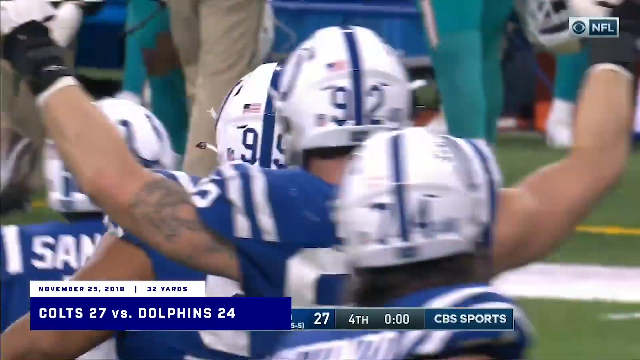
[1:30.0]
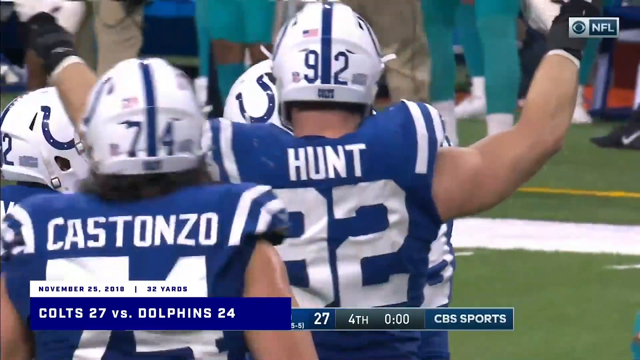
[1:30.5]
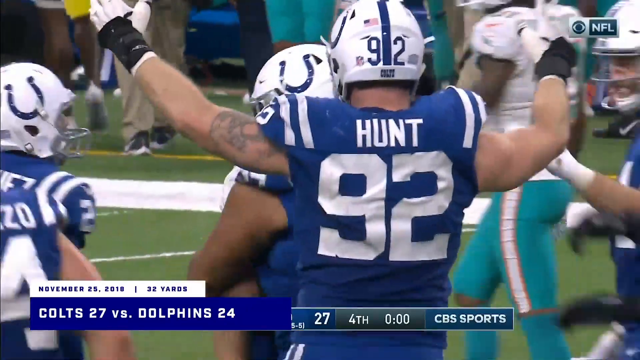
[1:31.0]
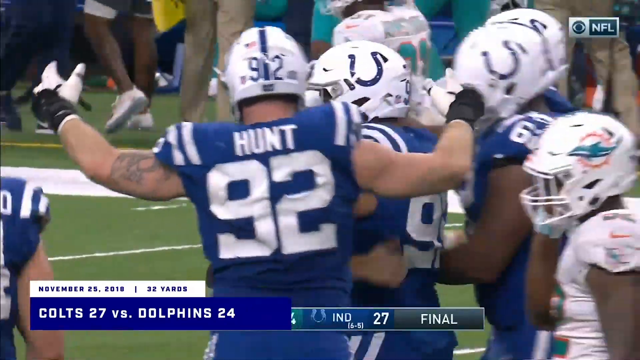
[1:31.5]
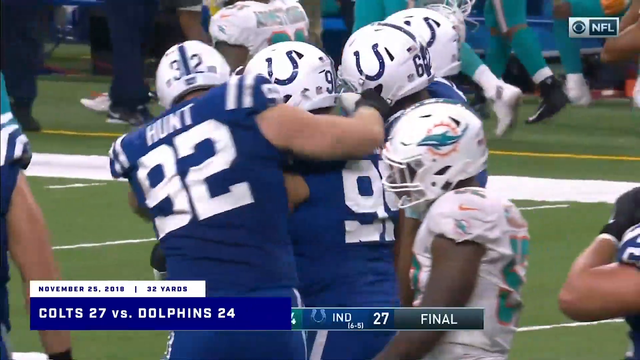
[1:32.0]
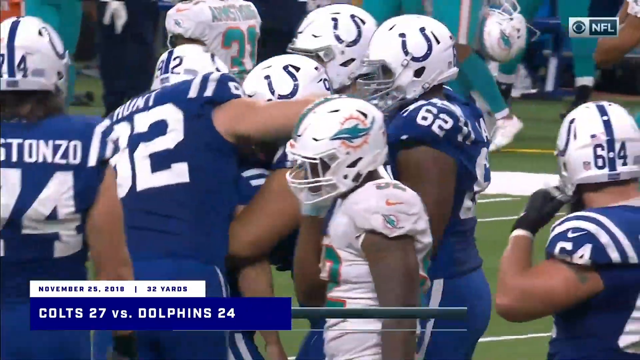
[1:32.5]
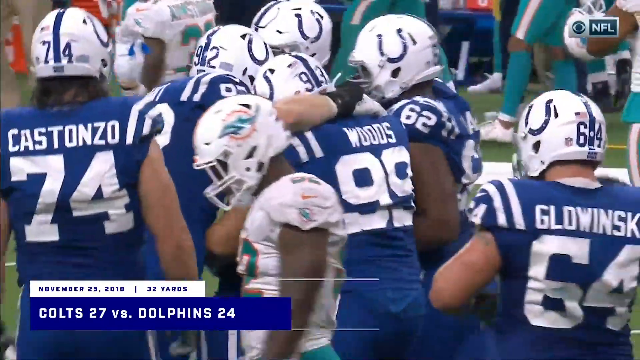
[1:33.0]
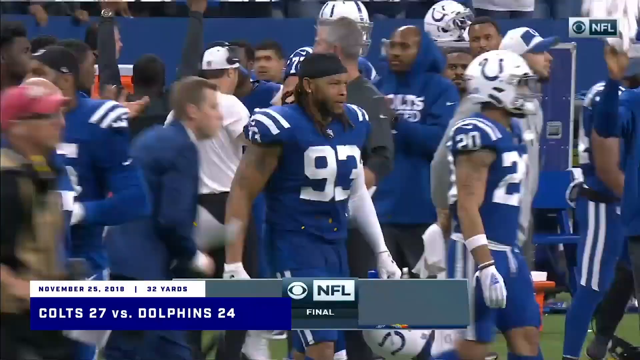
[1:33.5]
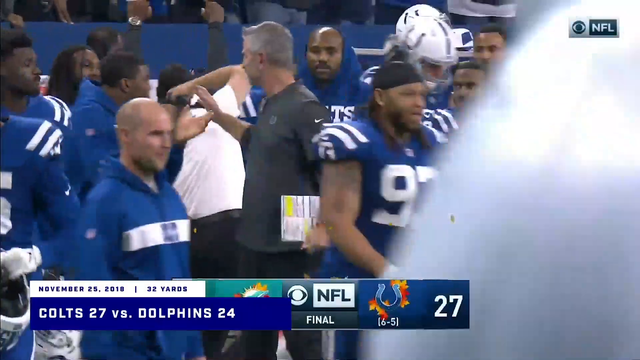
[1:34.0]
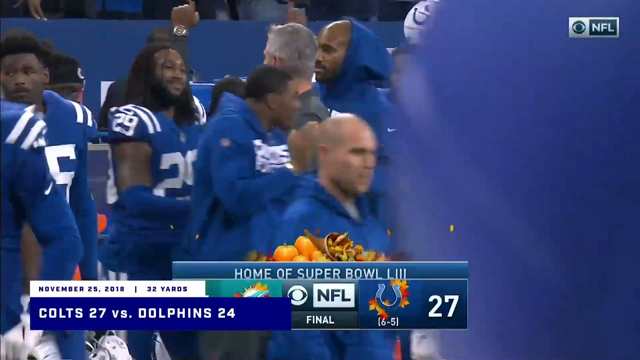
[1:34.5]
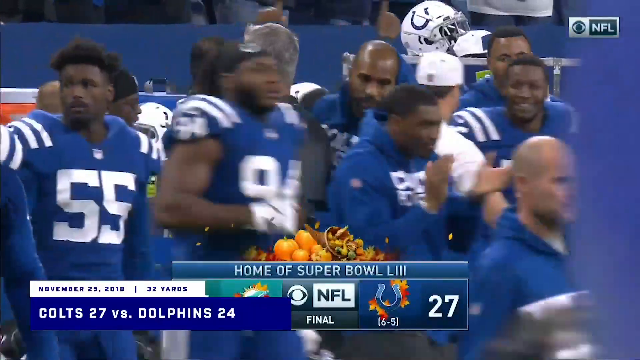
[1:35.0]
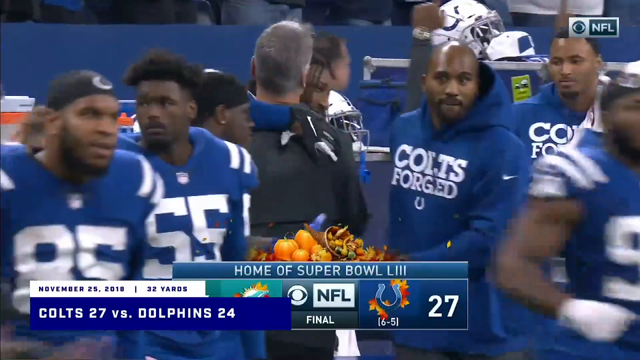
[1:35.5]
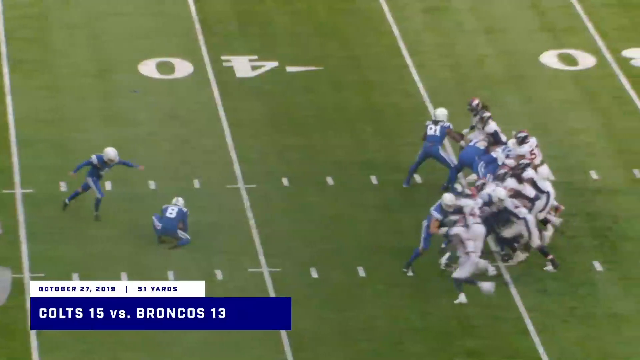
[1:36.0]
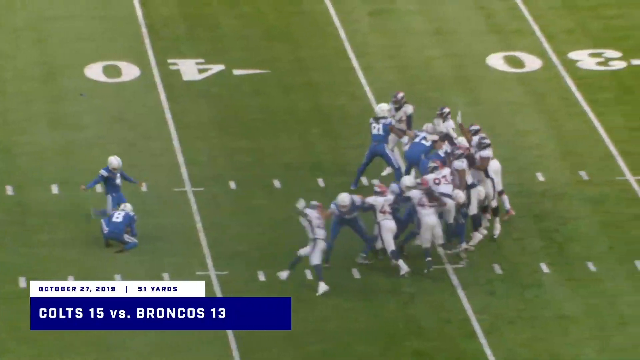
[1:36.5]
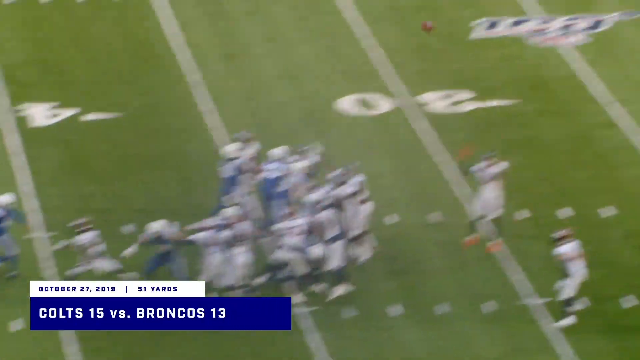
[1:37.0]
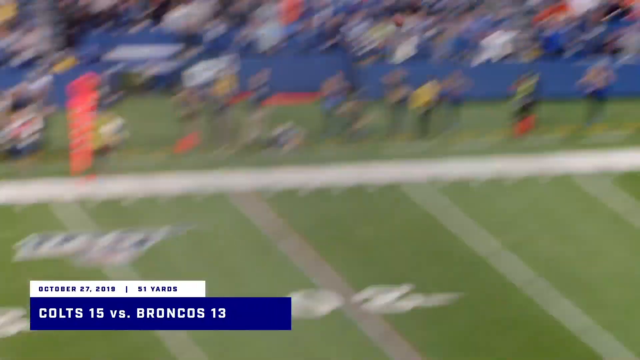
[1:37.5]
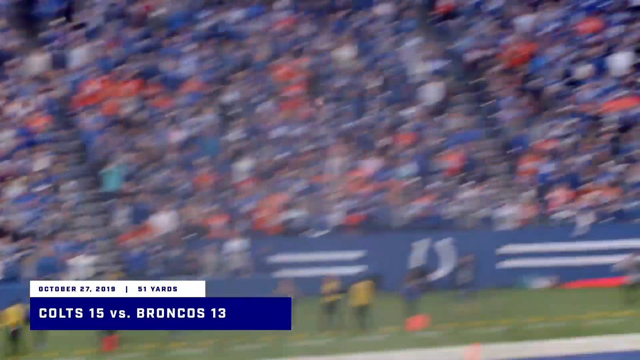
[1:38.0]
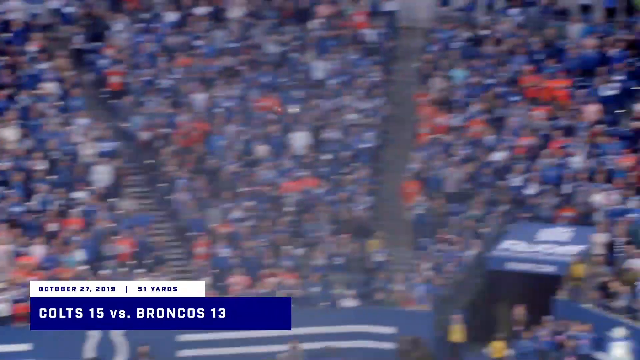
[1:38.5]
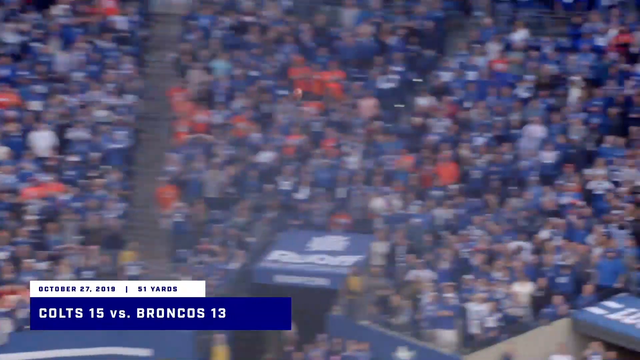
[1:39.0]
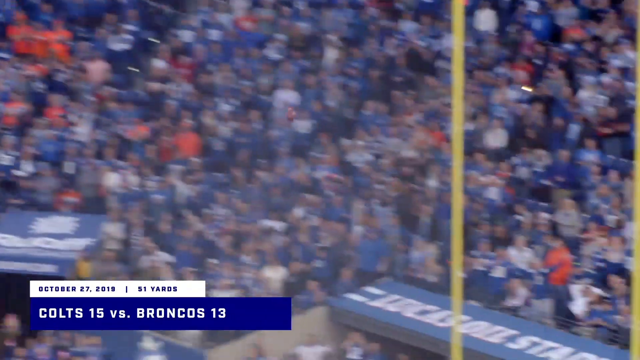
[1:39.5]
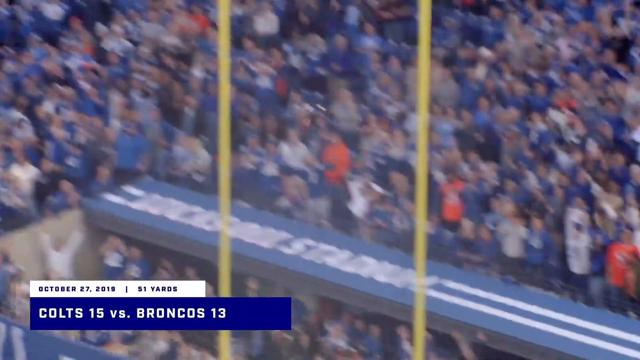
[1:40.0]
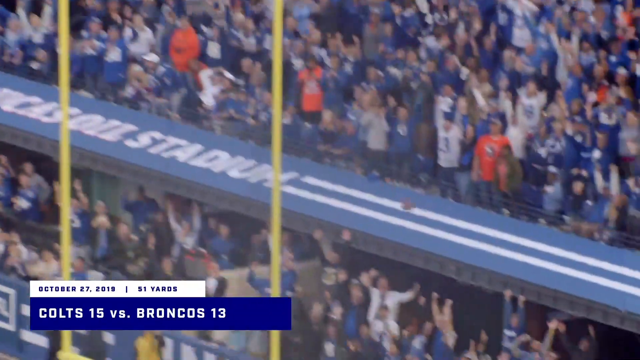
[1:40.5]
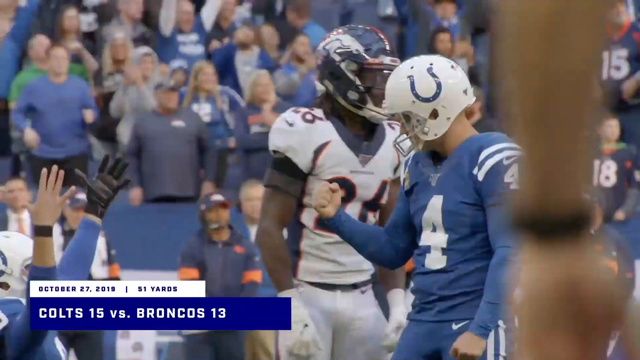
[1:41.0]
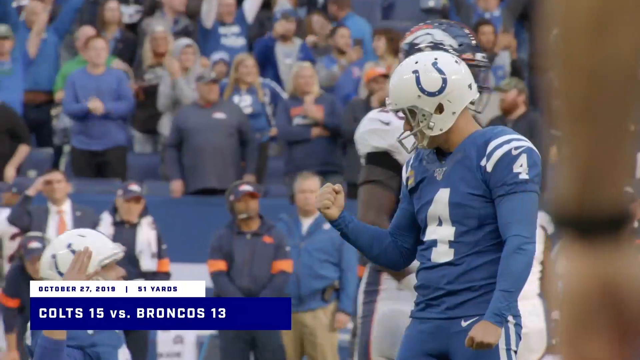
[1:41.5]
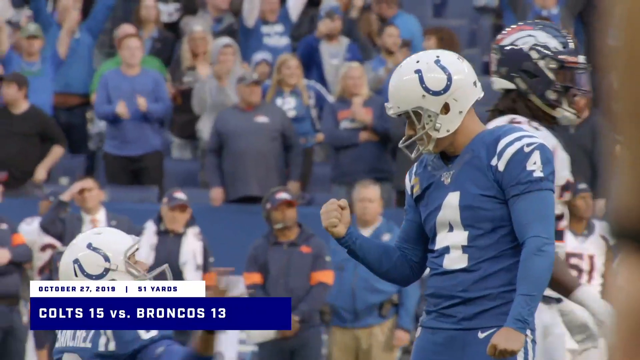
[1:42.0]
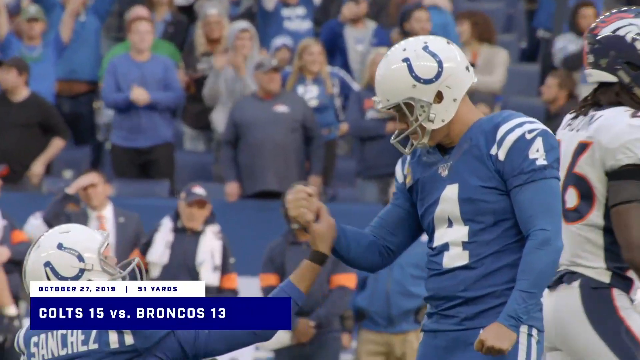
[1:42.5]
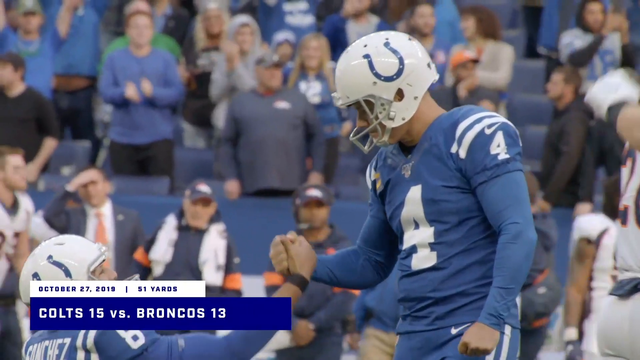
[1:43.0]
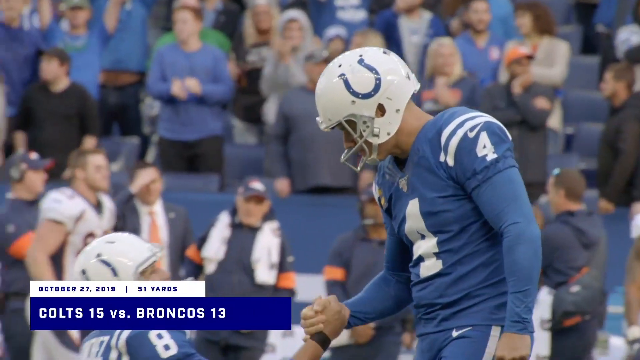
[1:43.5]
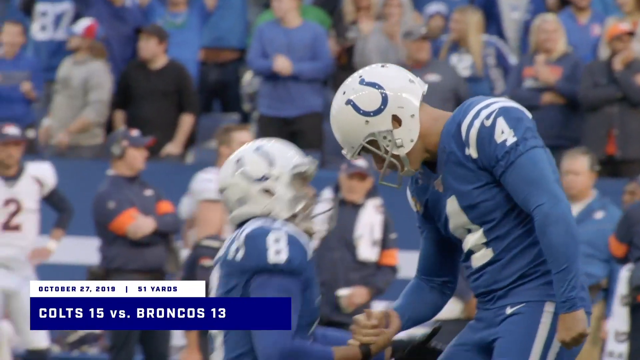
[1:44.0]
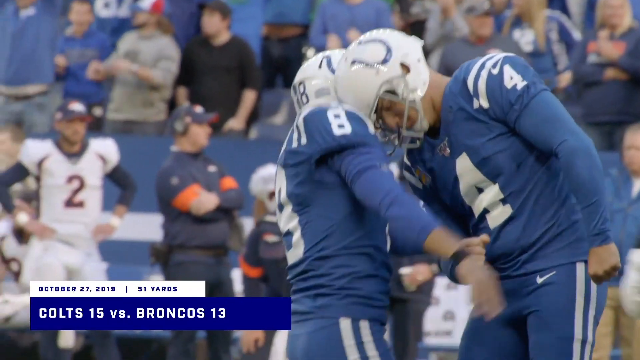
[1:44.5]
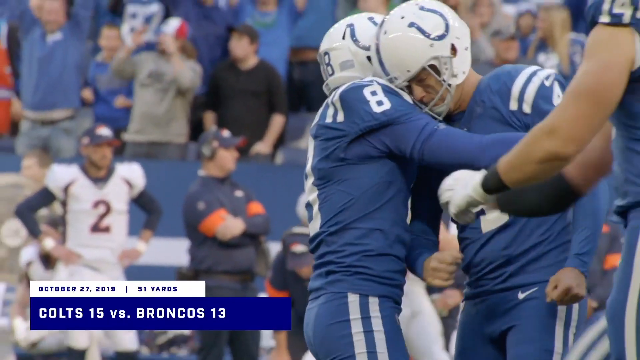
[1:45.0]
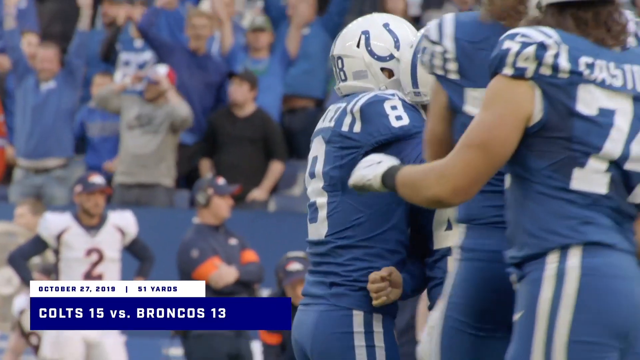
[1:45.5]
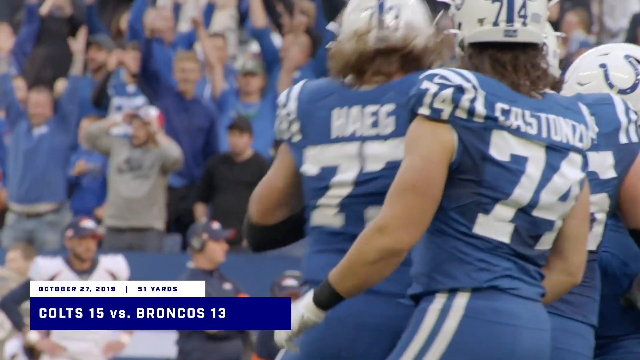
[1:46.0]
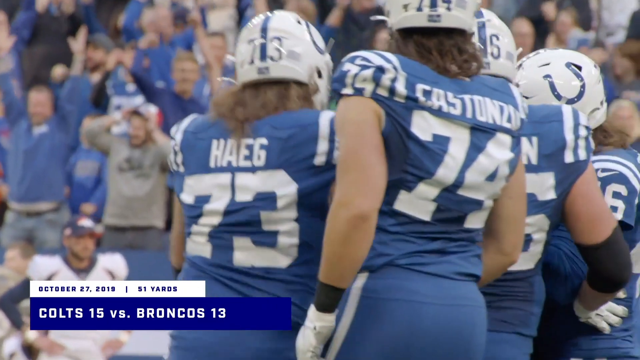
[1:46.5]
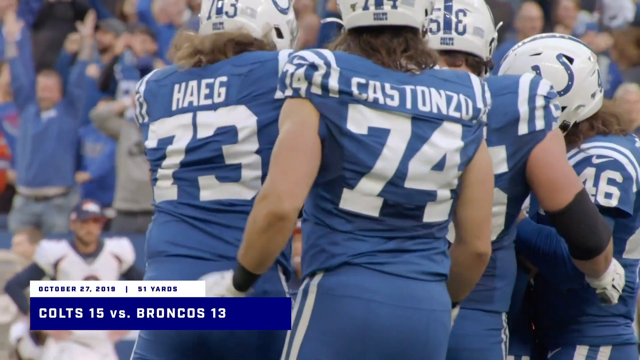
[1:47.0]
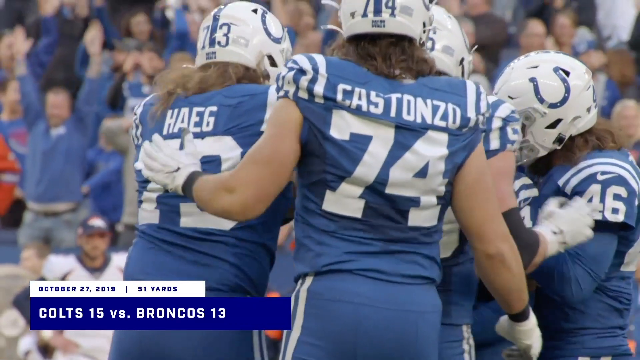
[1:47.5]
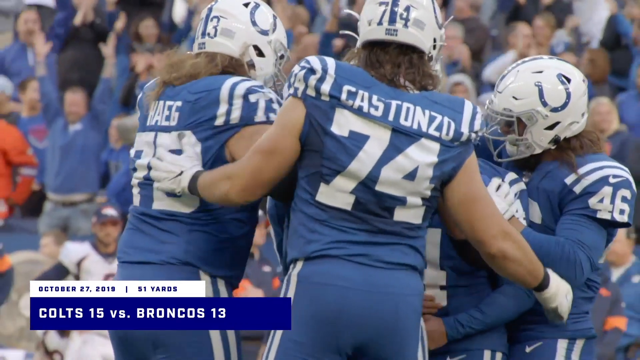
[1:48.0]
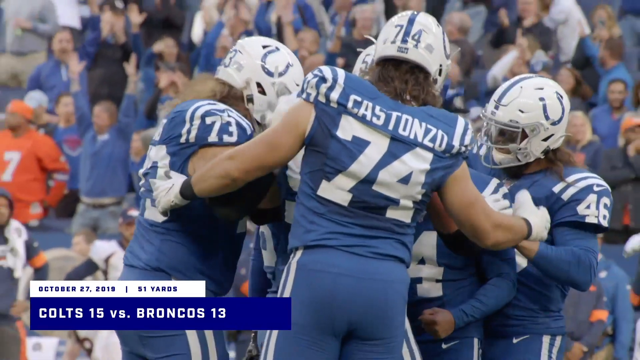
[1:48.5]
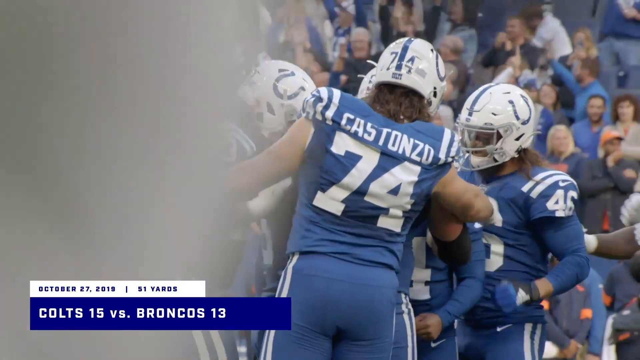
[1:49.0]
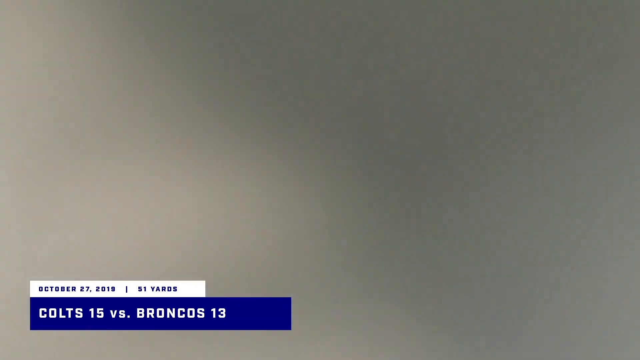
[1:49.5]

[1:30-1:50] The Colts celebrate in blue uniforms with white lettering, possibly their home uniforms, as the whole team celebrates. About six players are on screen with their backs visible, showing numbers 99, 62 and 64 and the last names Woods and Glowinski. More players celebrate at the end of the game. A 51-yard field goal by the kicker follows; he wears the same blue jersey, which appears to be a home jersey. The successful kick is seen from kind of a side view, then the camera kind of pans from left to right to almost a front view of the ball going through the goalpost. The kicker then celebrates with his team, including a playful headbutt, and approximately four other teammates come over to congratulate him.